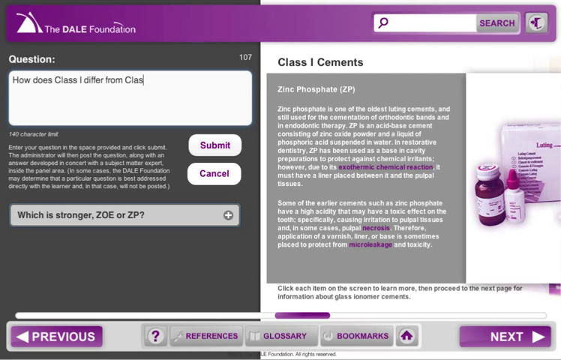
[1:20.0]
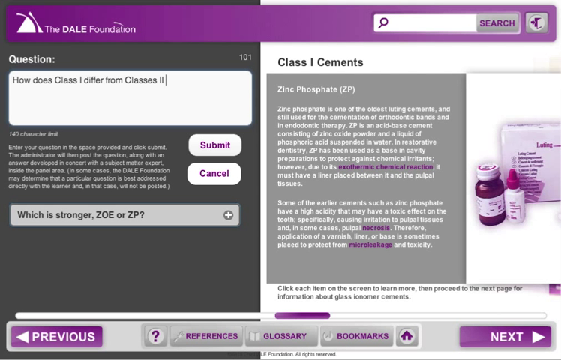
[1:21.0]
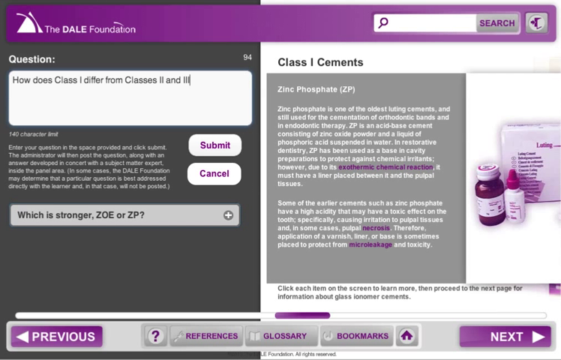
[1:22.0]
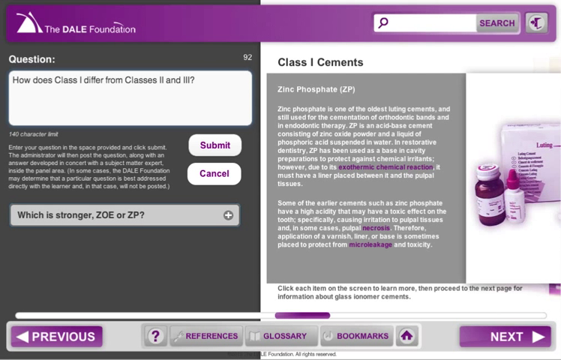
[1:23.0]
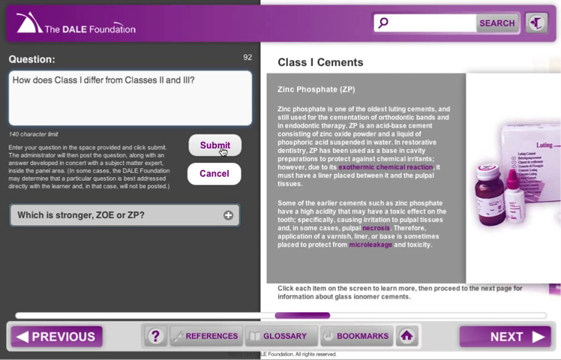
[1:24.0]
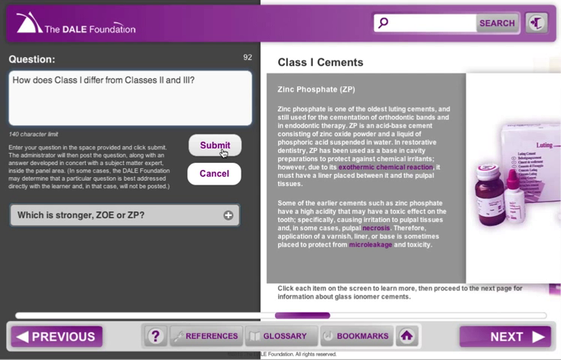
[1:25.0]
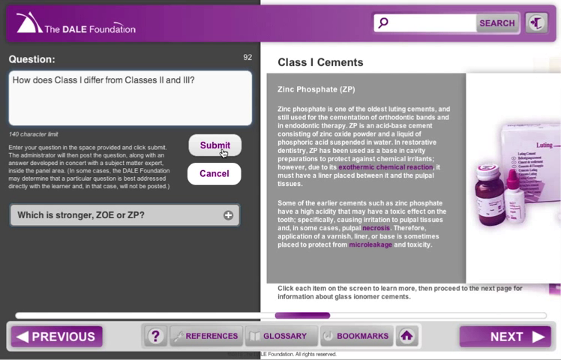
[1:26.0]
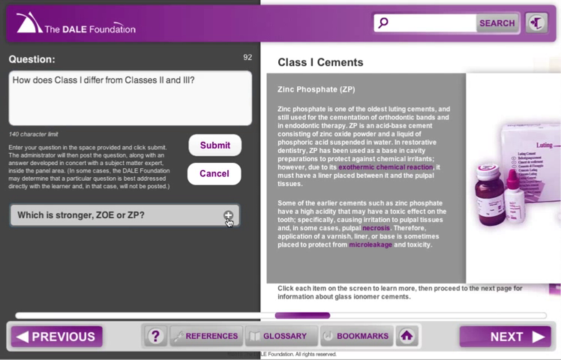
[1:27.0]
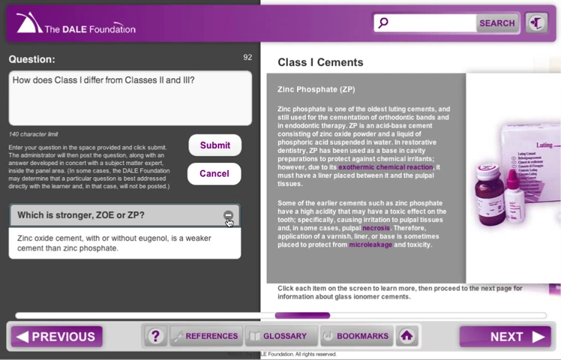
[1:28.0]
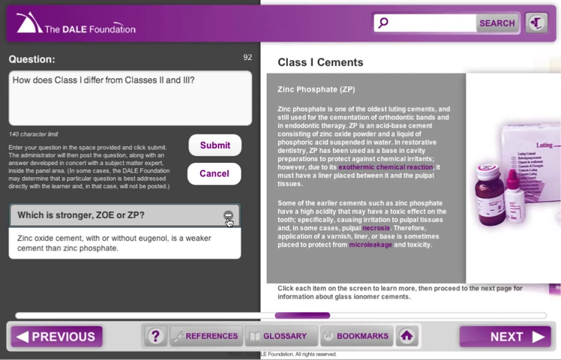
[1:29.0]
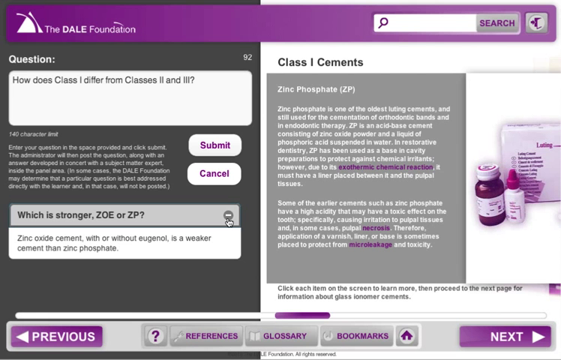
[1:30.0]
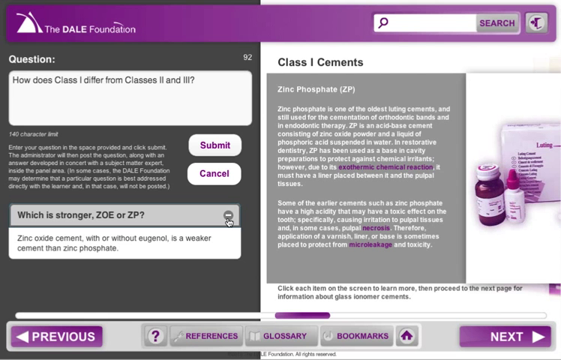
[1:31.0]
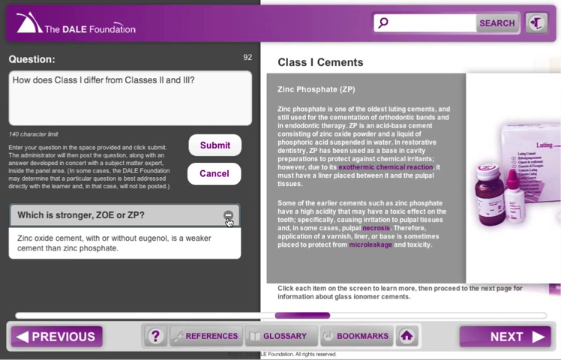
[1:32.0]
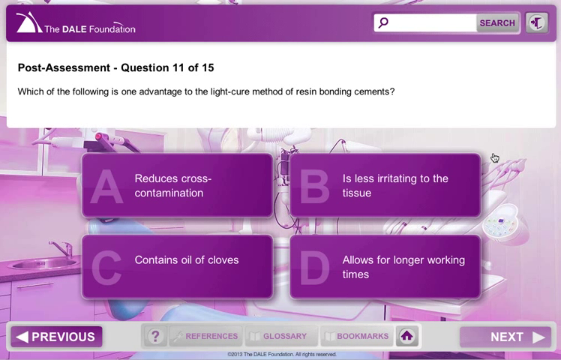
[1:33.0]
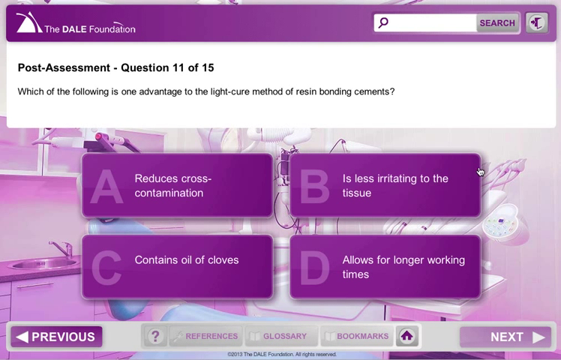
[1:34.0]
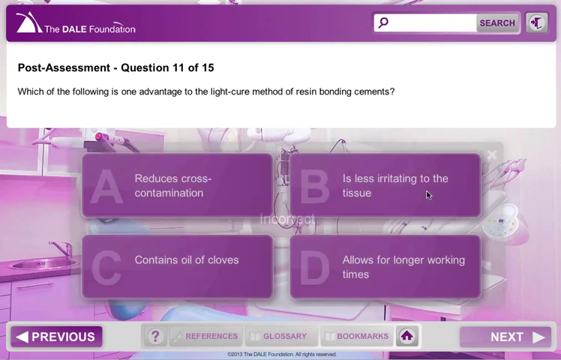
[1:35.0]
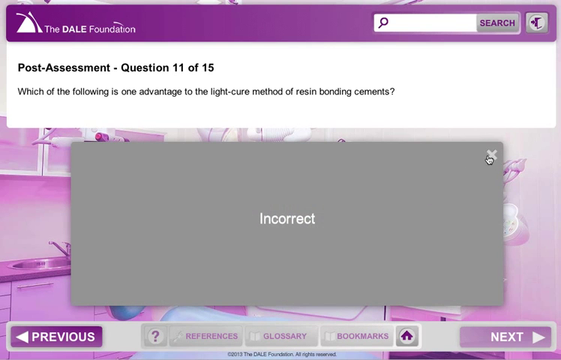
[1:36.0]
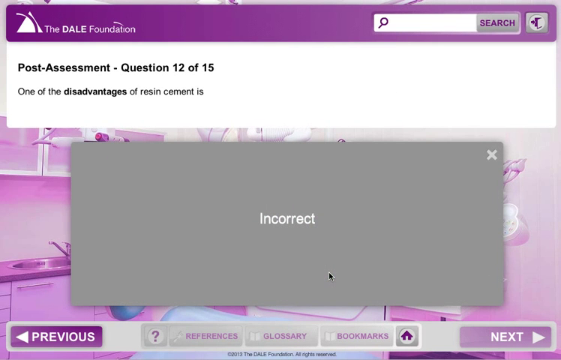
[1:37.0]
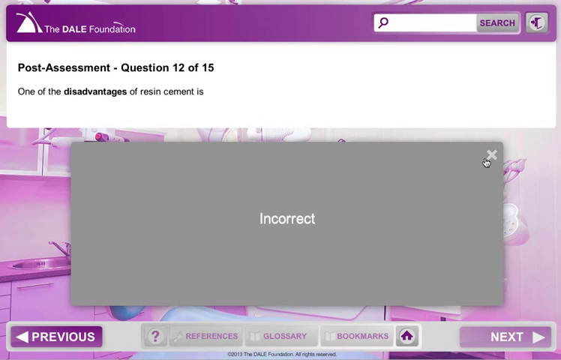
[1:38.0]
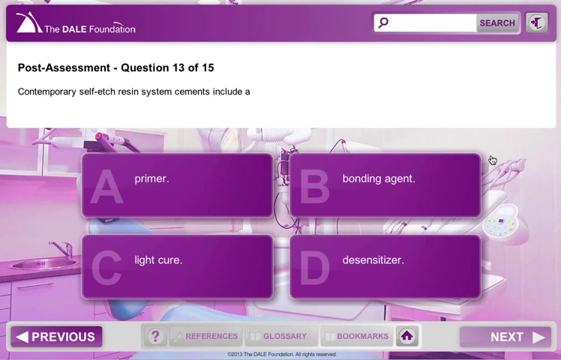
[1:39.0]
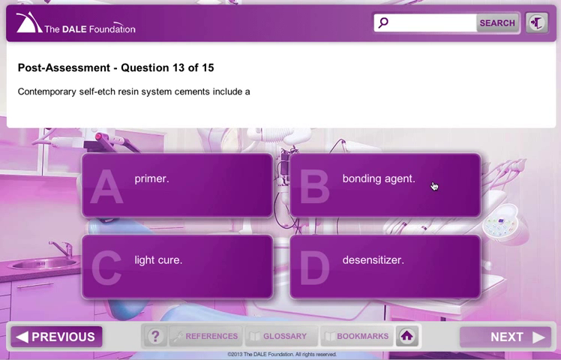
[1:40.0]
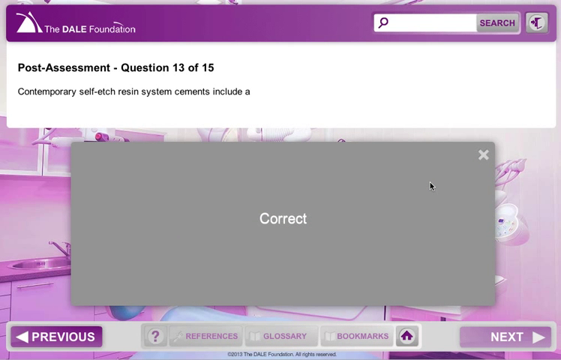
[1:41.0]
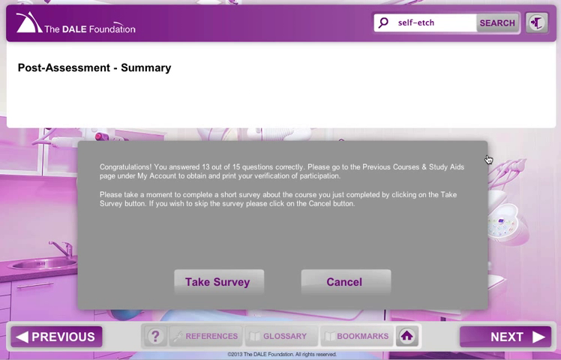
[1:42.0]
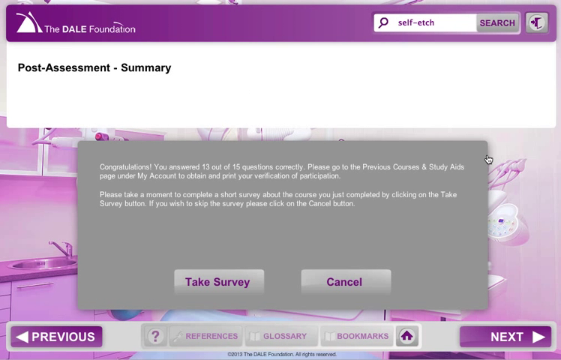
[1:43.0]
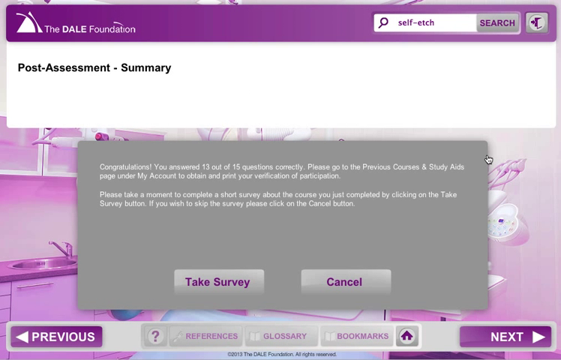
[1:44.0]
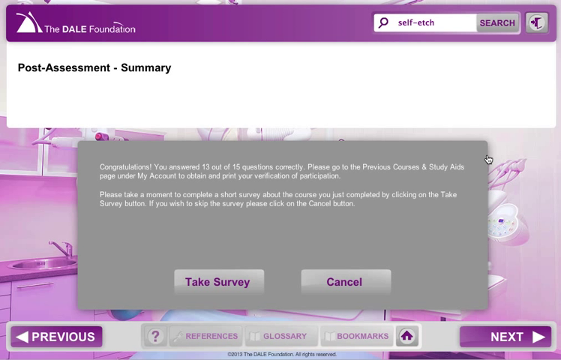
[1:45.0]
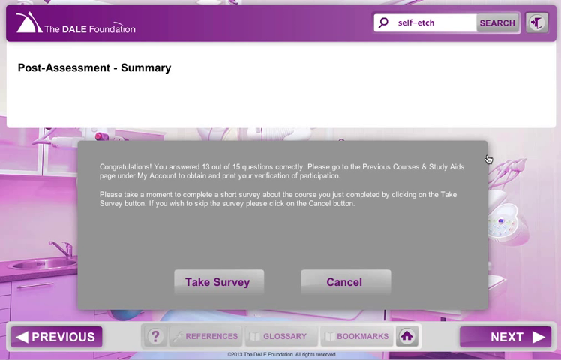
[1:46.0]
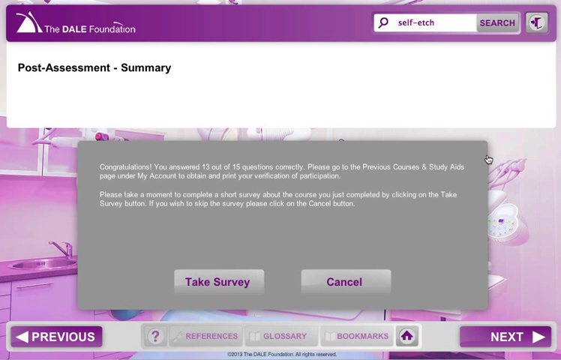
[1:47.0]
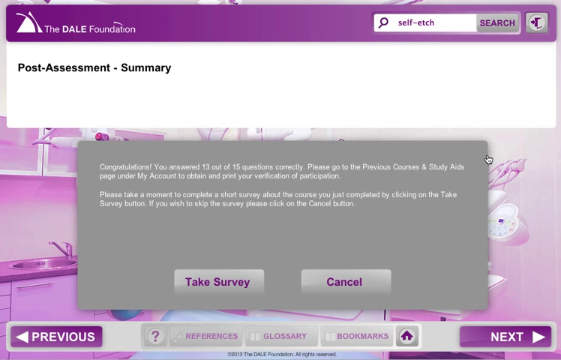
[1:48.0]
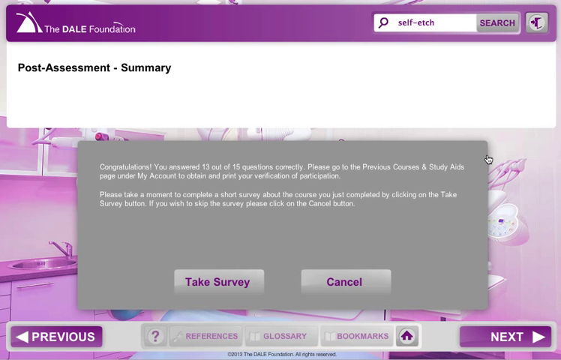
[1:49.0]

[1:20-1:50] The person continues typing the question, which becomes "how does class one differ from classes two and three", and submits it using the submit button underneath; there is also a cancel option. At the bottom is the text "which is stronger Zoe or ZP", and clicking it immediately shows the answer: "zinc oxide cement with or without eugenol is a weaker cement than zinc phosphate". He minimises that and moves to a new post-assessment screen showing question 11 of 15: "Which of the following is one advantage to the light-cure method of resin bonding cements?" The options, A to D, are "reduces cross-contamination", "is less irritating to the tissue", "contains oil of cloves" and "allows for longer working times". He clicks an answer that is incorrect, then a different answer that is also incorrect, and the questions continue with 12 and 13. At the end a text box appears reading "summary, congratulations you answered 13 out of 15 answers correctly. Please go to the previous courses and study aids to obtain and print your verification of qualification."